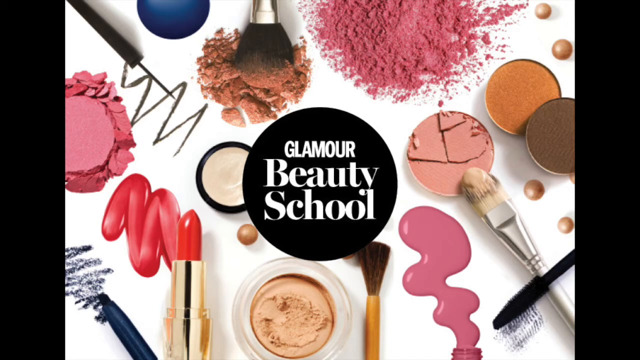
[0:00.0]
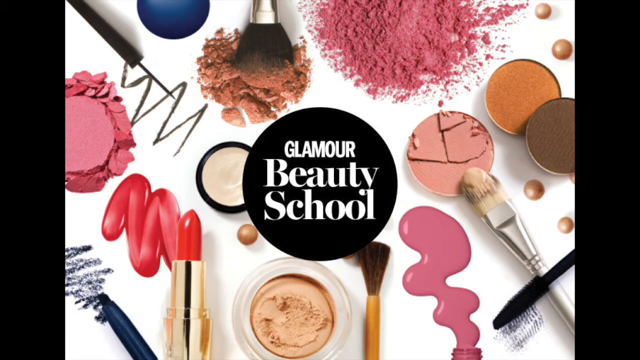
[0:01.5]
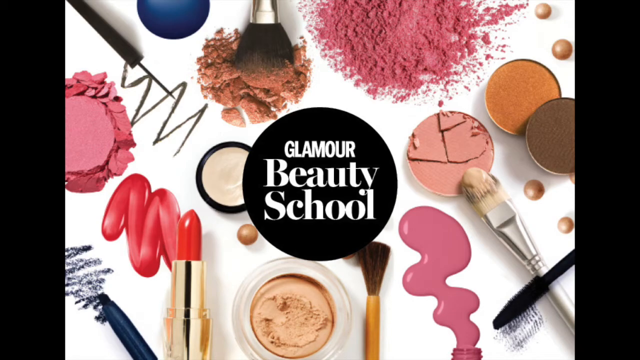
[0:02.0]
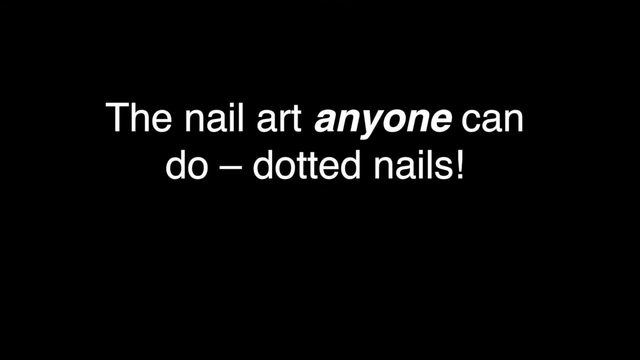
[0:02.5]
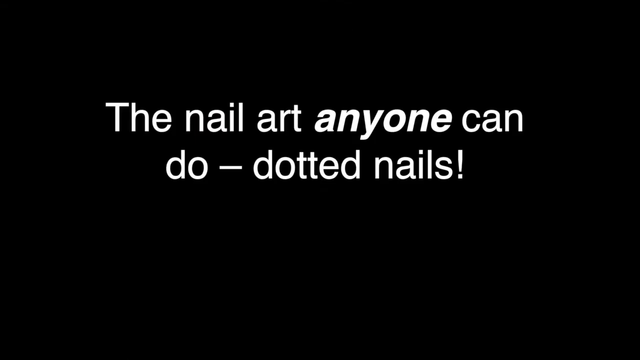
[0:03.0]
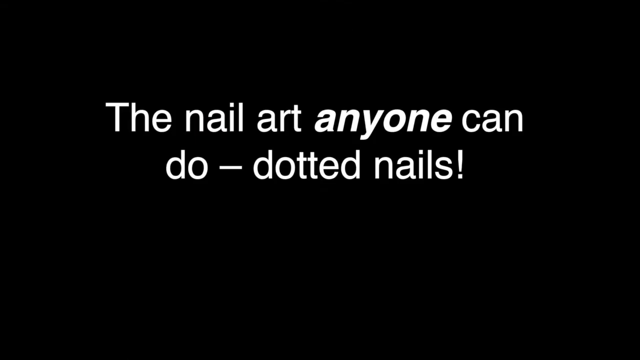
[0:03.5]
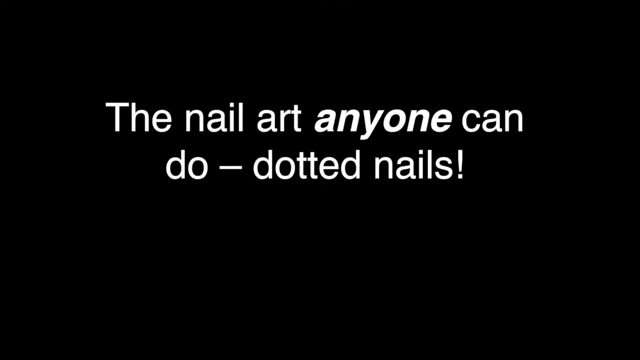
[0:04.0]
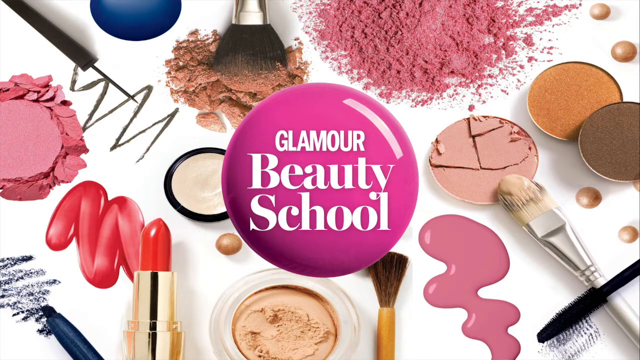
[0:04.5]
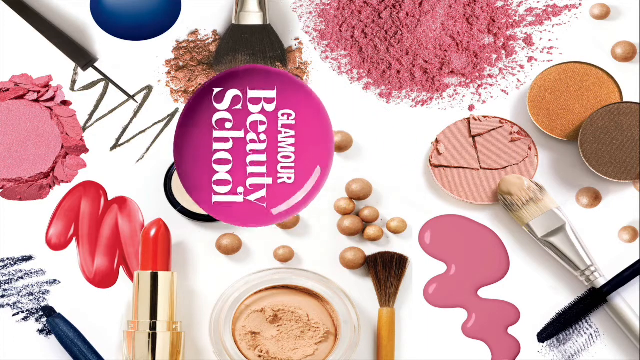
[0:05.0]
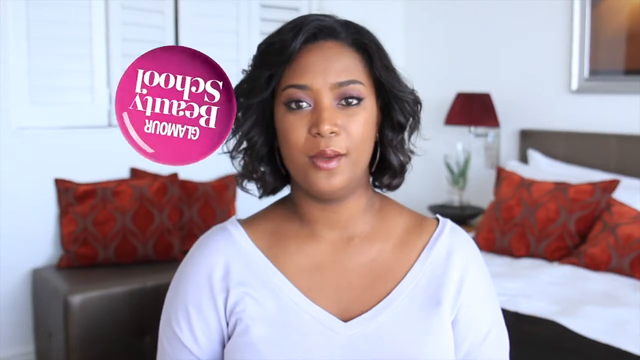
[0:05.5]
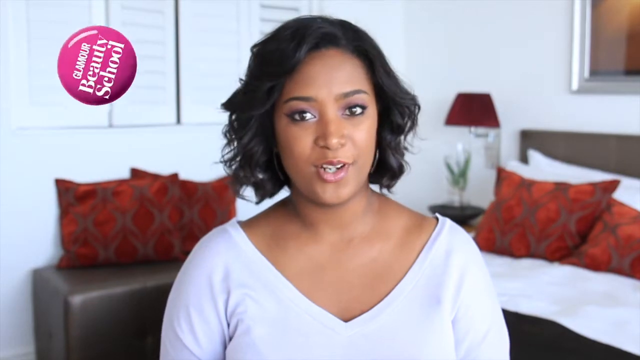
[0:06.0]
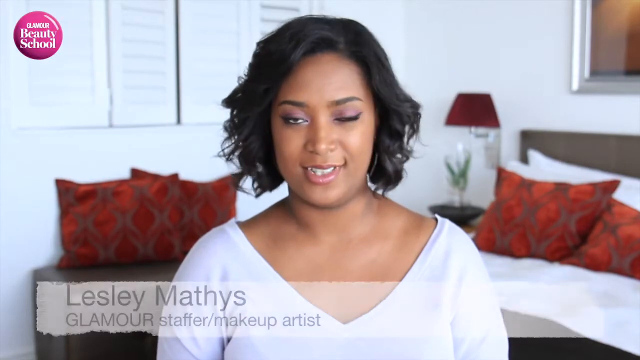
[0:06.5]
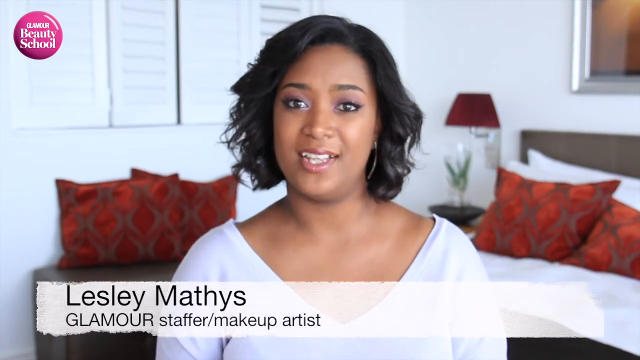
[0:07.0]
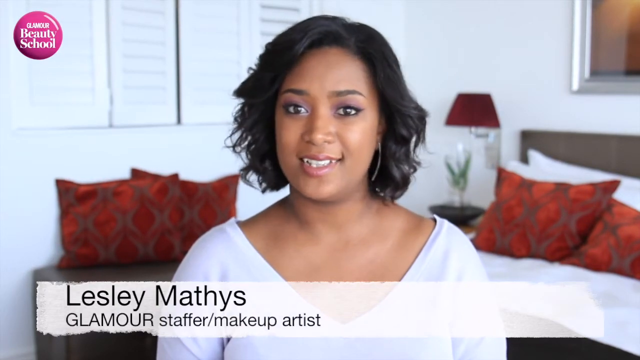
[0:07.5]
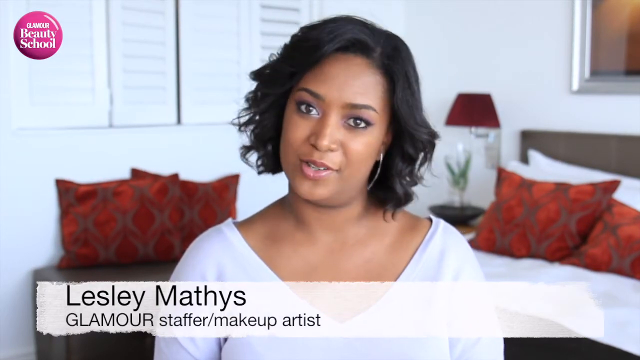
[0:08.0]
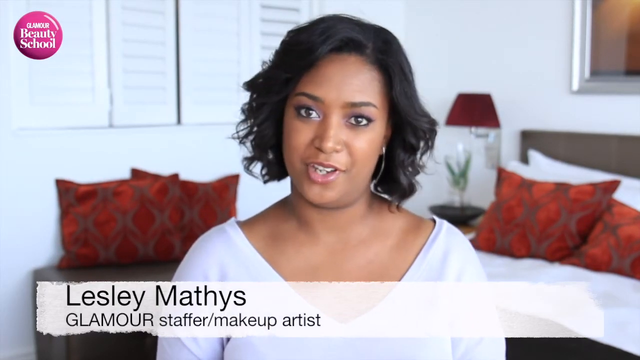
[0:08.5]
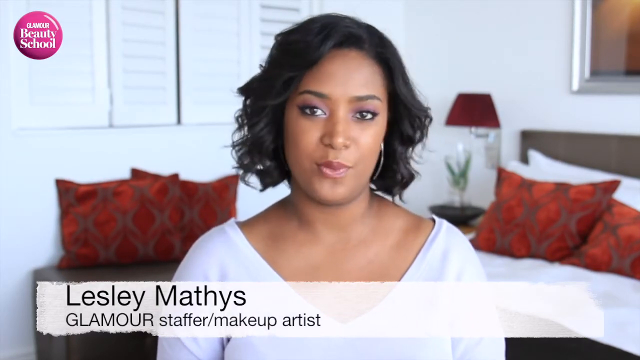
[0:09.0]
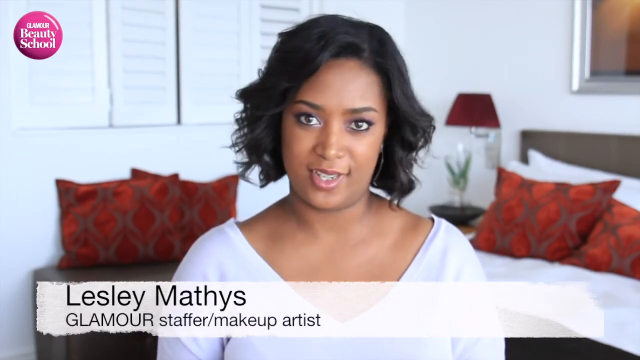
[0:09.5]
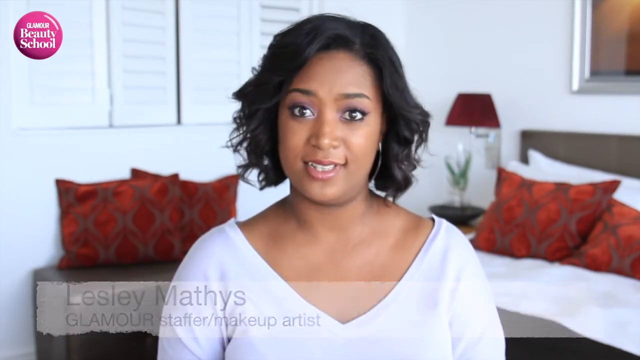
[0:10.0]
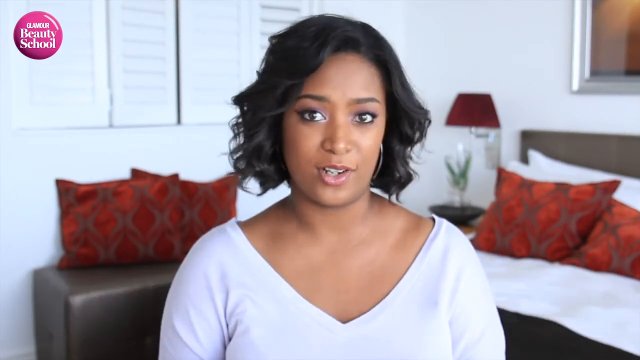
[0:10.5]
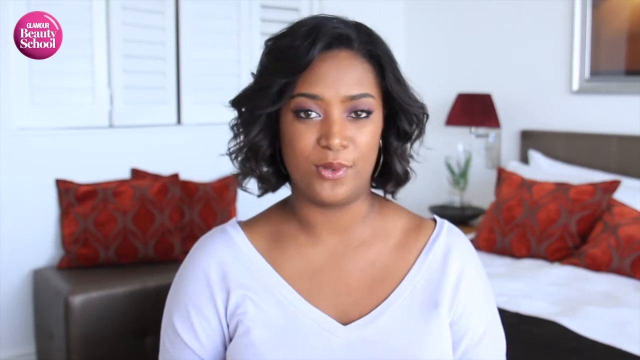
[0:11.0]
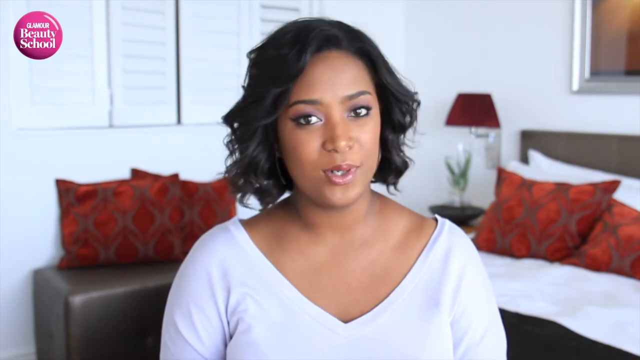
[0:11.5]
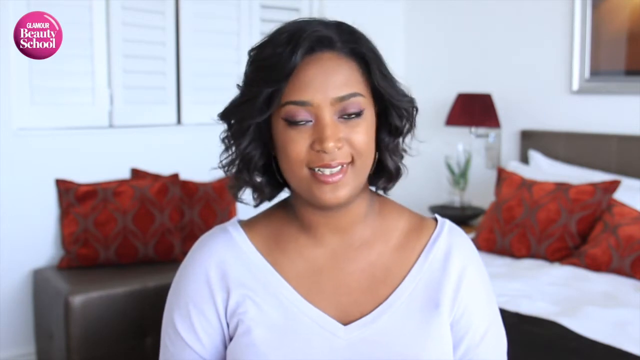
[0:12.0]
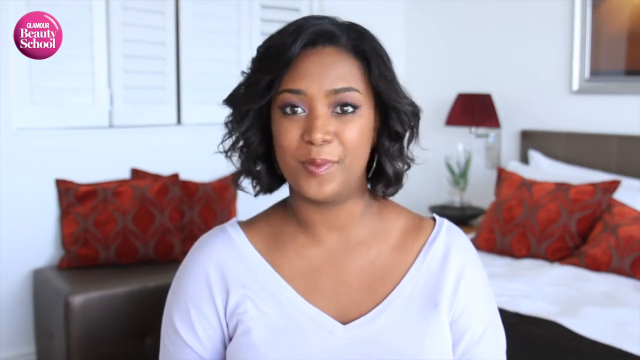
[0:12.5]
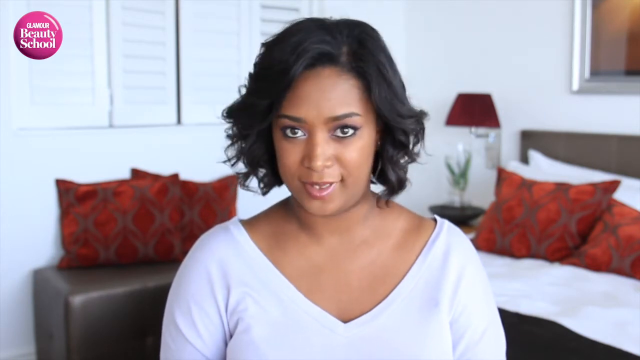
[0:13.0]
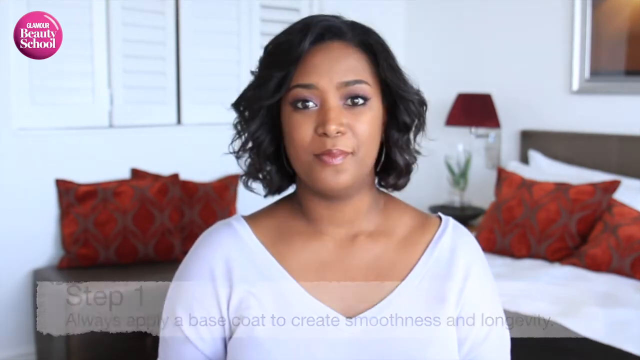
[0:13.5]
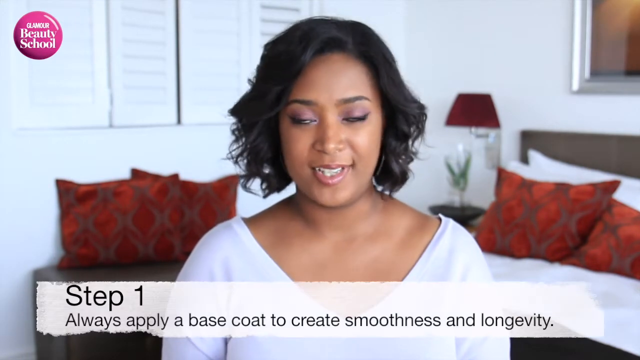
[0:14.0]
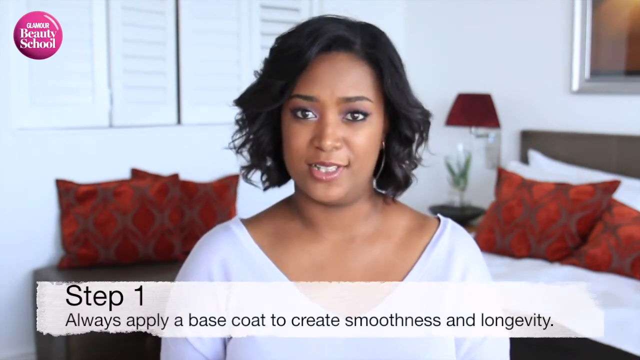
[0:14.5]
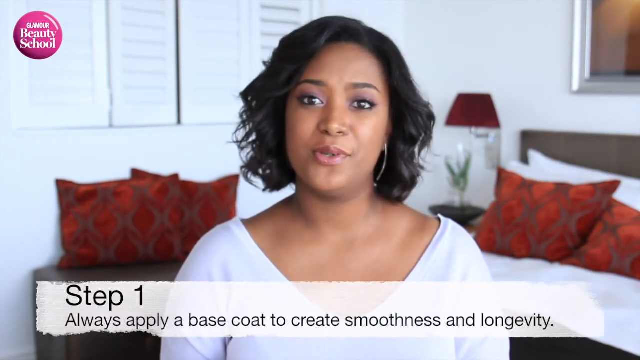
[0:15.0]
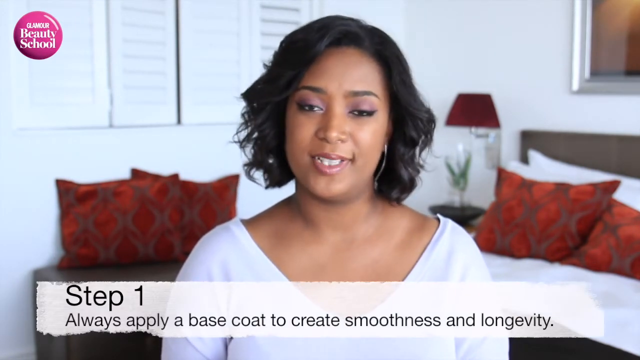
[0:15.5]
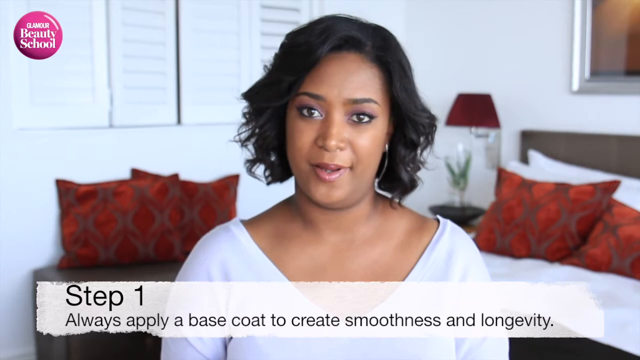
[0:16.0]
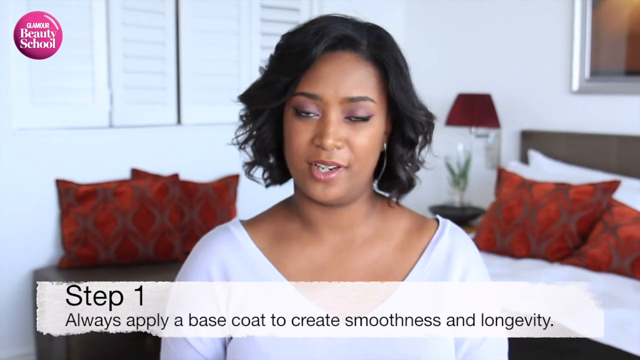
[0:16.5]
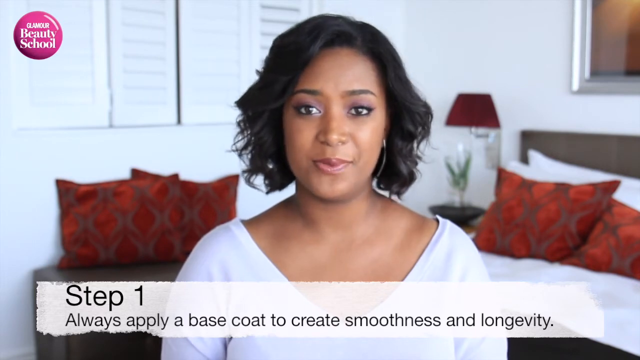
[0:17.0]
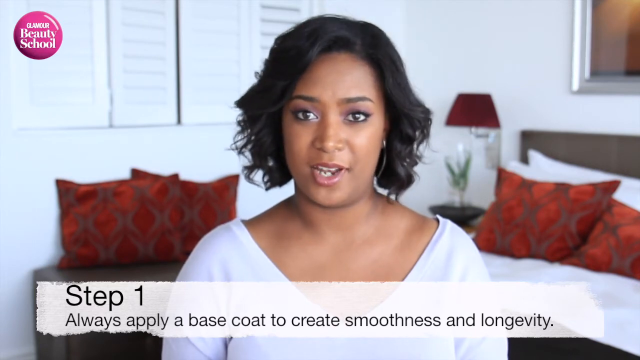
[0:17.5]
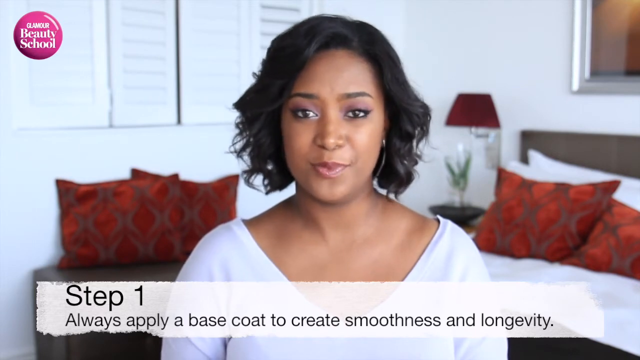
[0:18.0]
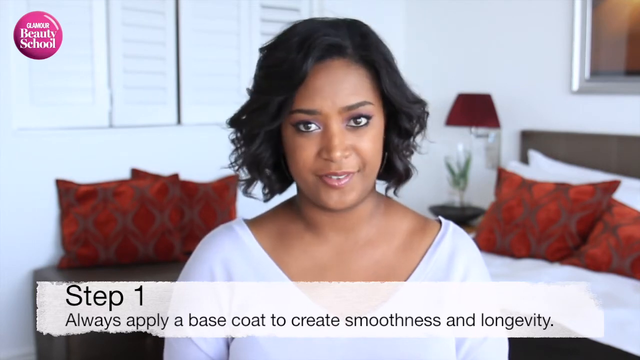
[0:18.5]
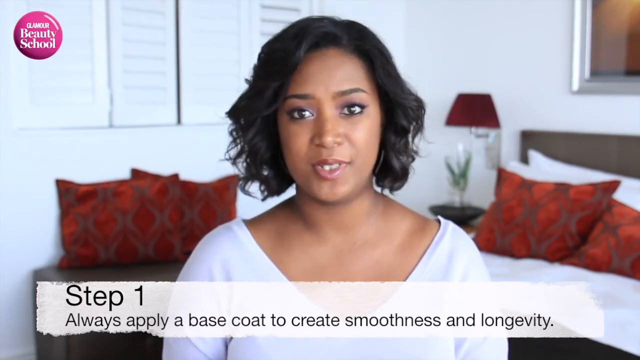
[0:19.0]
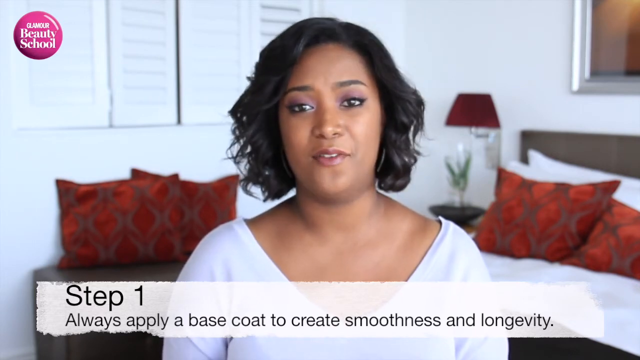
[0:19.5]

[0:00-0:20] The video is sponsored by Glamour Beauty School. The opening credits show several different types of makeup, including two eye shadow pans, with text that reads "the nail art anyone can do, dotted nails." The video then cuts to an African American woman with shoulder-length curly brown hair, wearing a white shirt. She is Leslie Mathis, a Glamour magazine staffer and makeup artist. Behind her in the background are a lamp and a bed with throw pillows. Leslie speaks into the camera. Text then appears at the bottom of the screen: "Step 1, always apply a base coat to create smoothness and longevity." The makeup shown includes a tube of red lipstick, nail polish and black eyeliner.